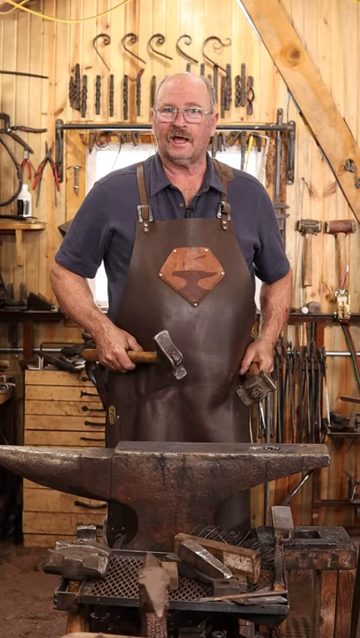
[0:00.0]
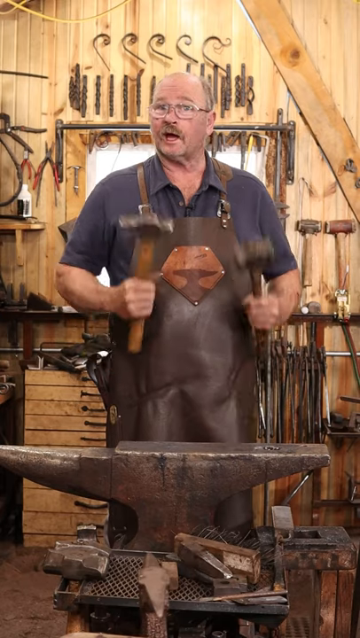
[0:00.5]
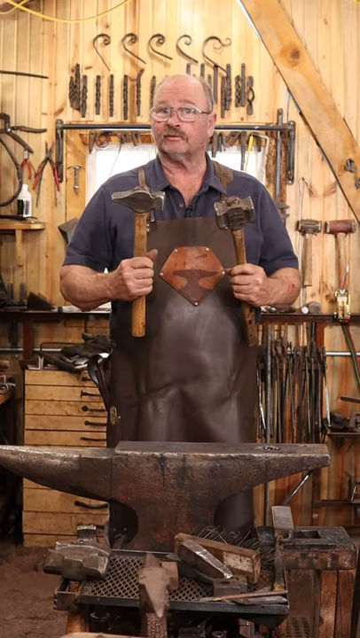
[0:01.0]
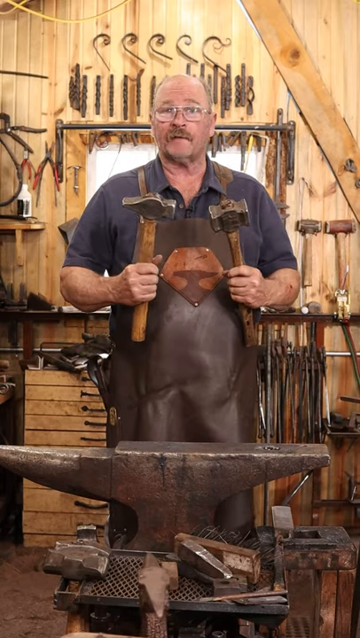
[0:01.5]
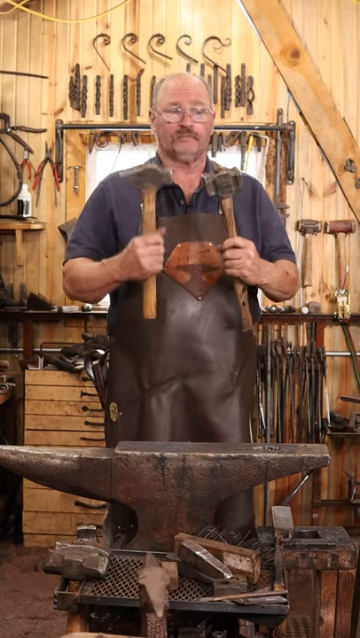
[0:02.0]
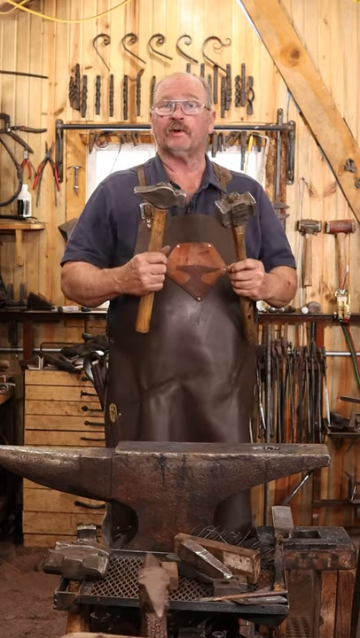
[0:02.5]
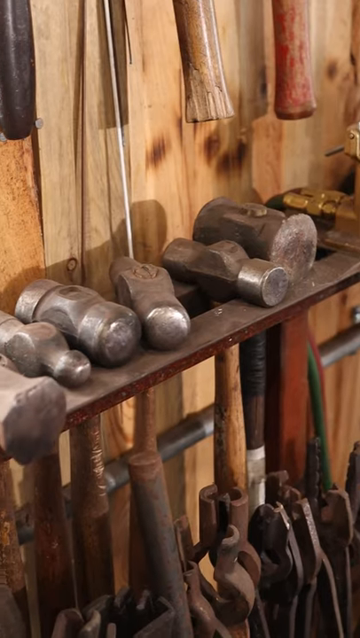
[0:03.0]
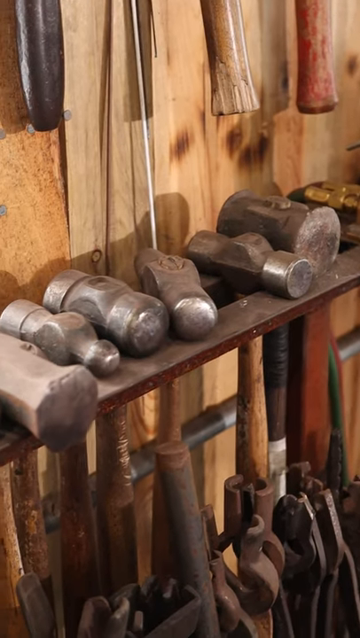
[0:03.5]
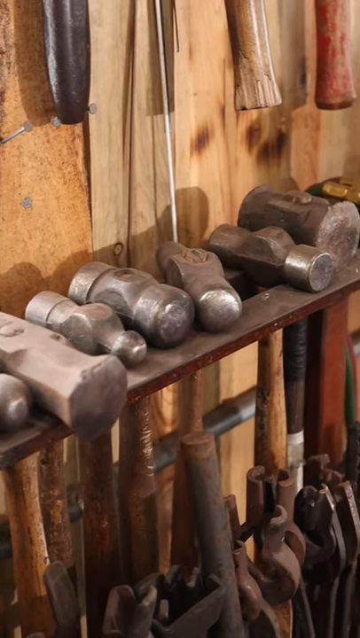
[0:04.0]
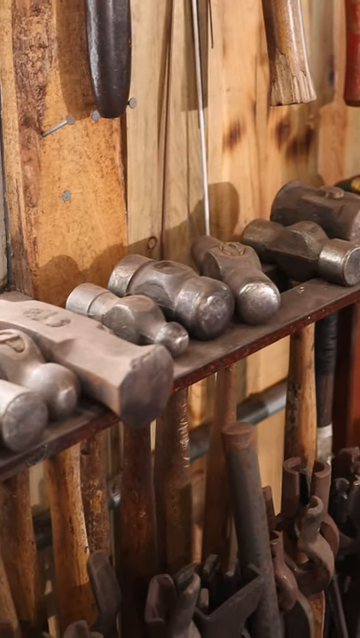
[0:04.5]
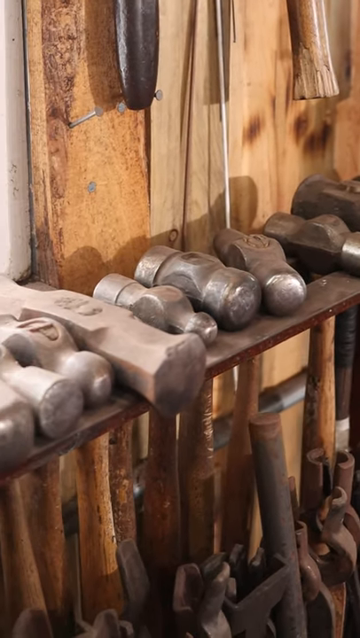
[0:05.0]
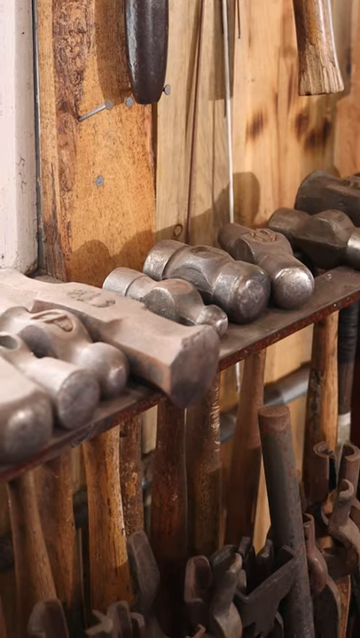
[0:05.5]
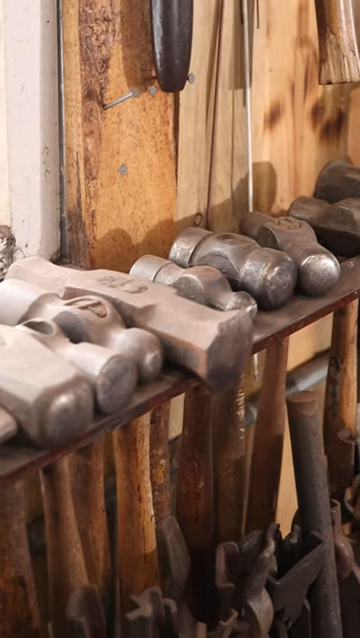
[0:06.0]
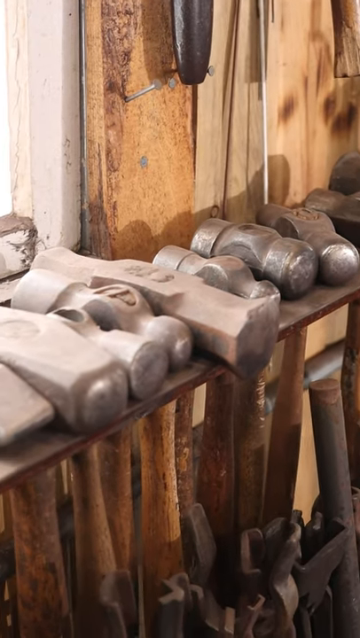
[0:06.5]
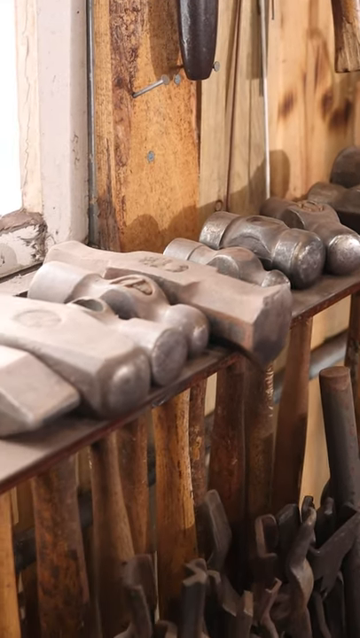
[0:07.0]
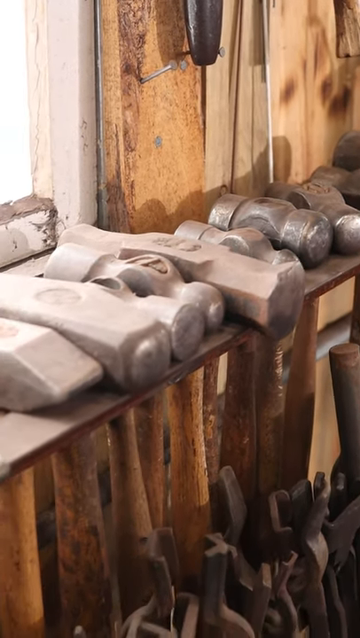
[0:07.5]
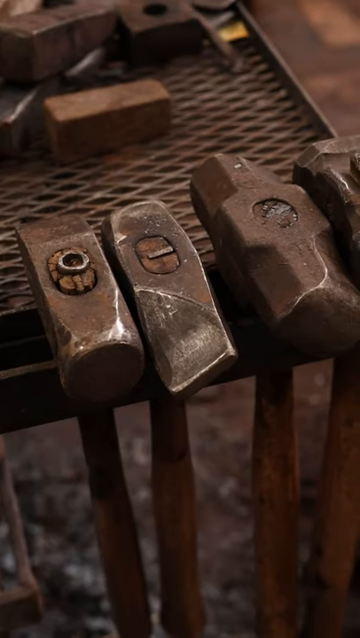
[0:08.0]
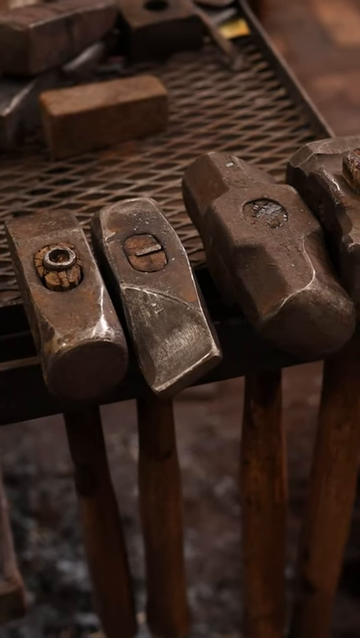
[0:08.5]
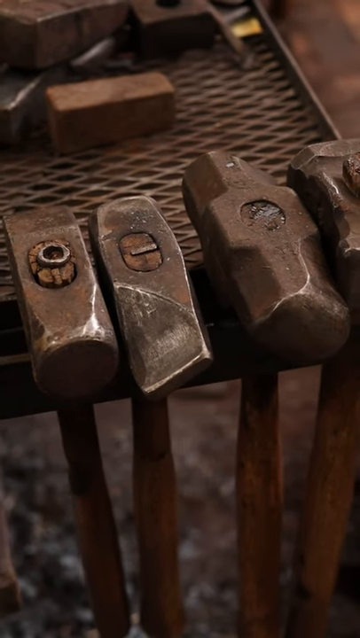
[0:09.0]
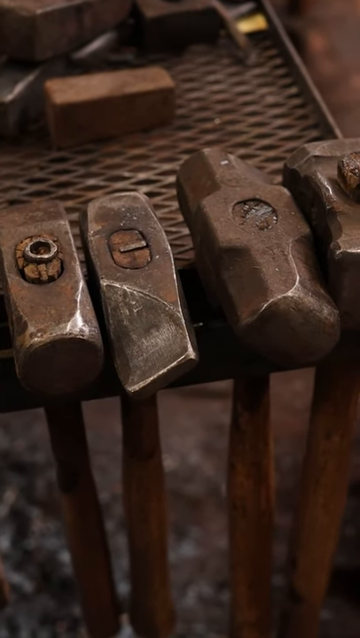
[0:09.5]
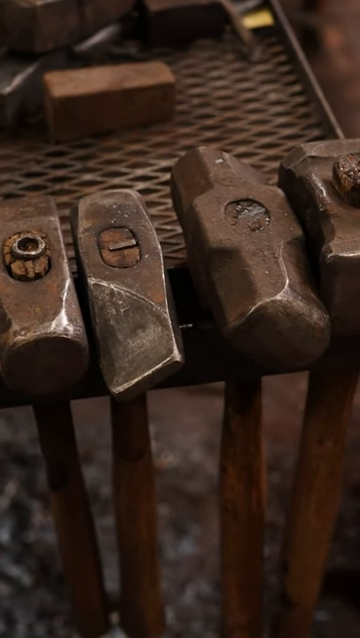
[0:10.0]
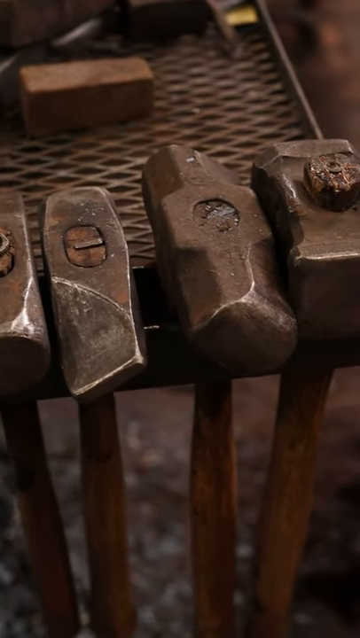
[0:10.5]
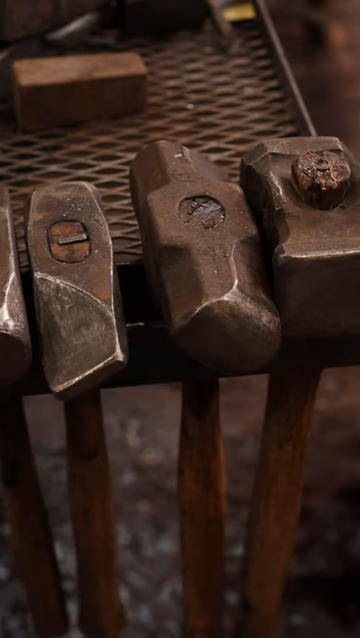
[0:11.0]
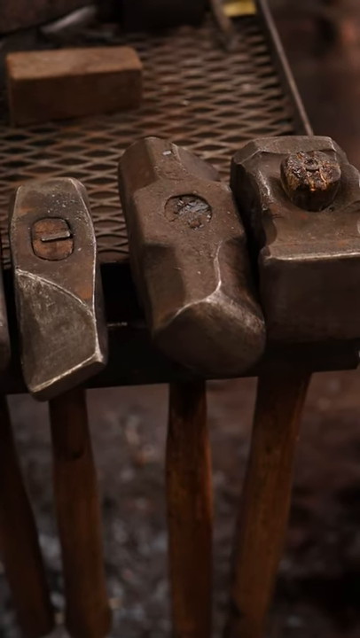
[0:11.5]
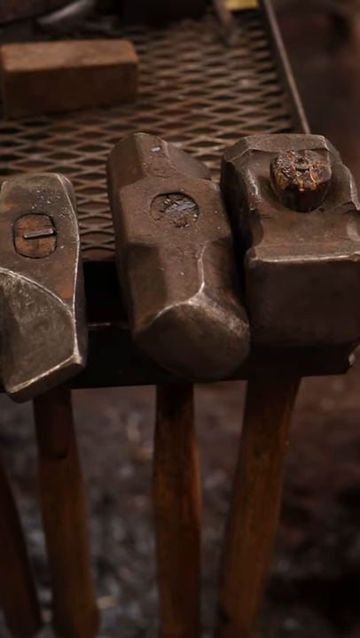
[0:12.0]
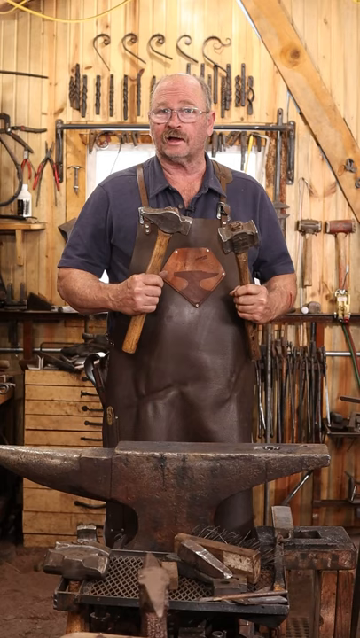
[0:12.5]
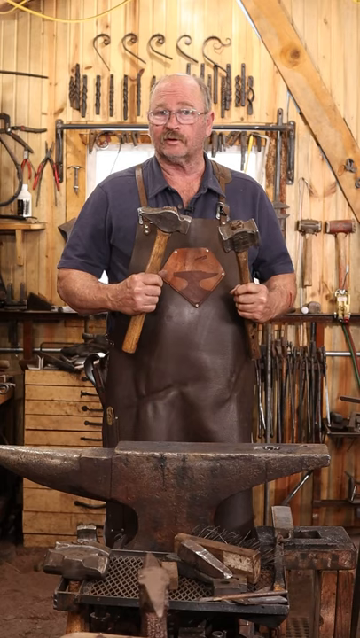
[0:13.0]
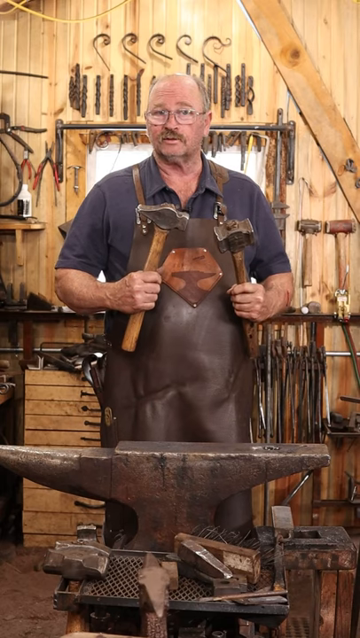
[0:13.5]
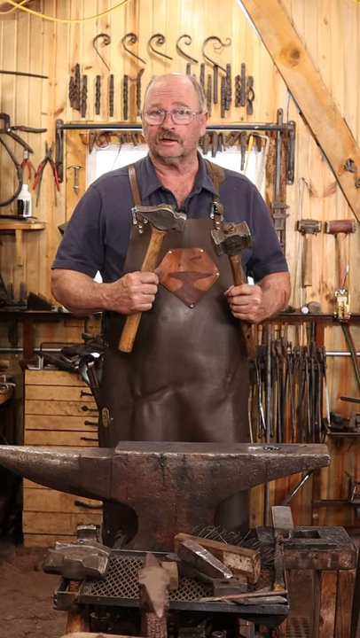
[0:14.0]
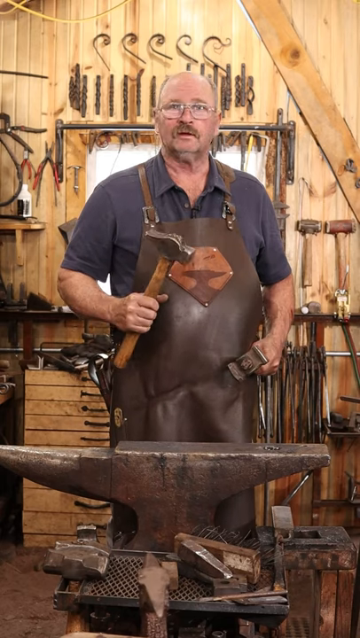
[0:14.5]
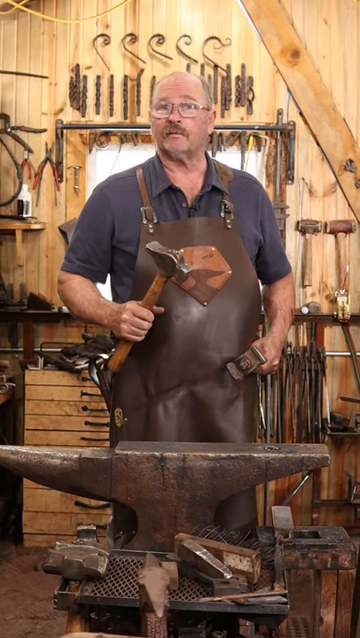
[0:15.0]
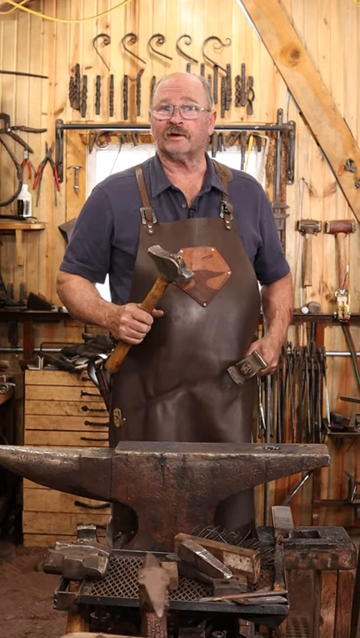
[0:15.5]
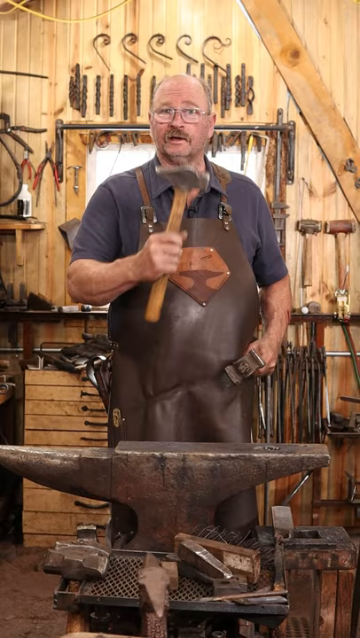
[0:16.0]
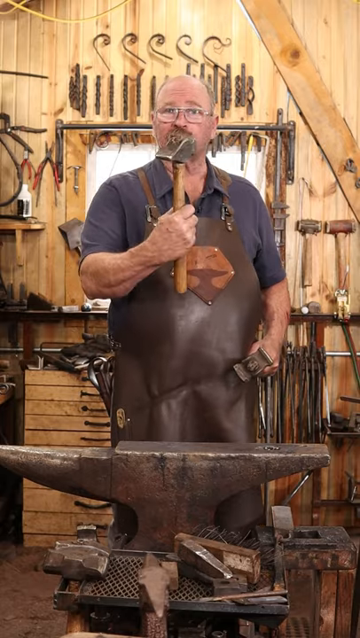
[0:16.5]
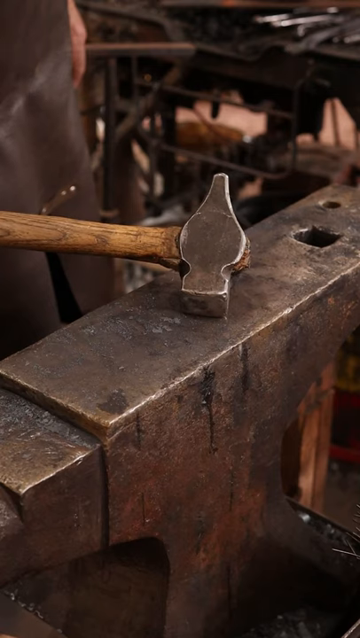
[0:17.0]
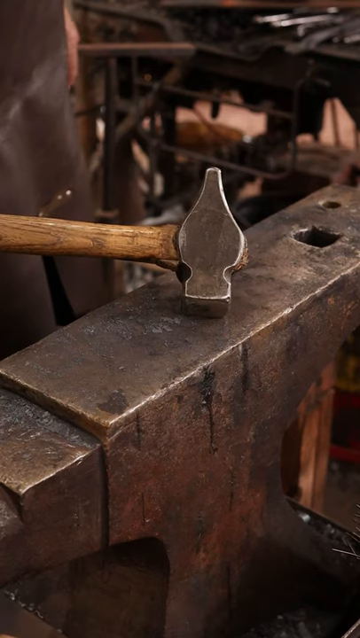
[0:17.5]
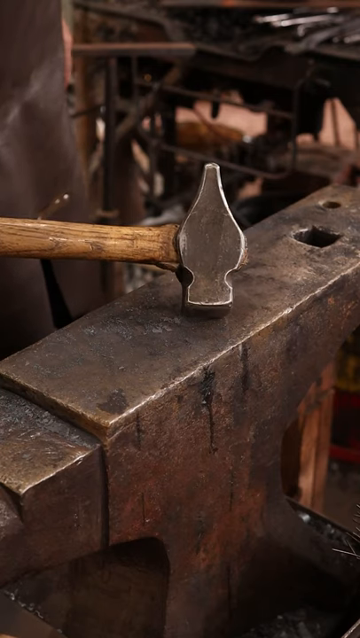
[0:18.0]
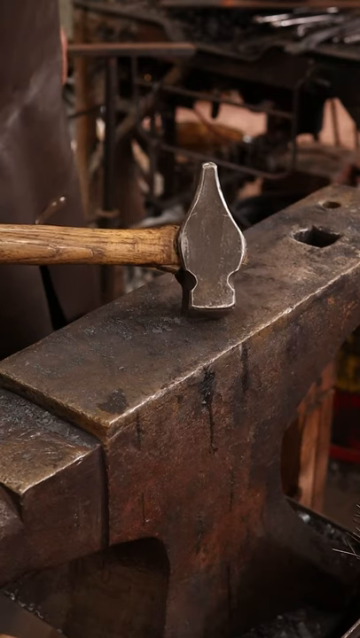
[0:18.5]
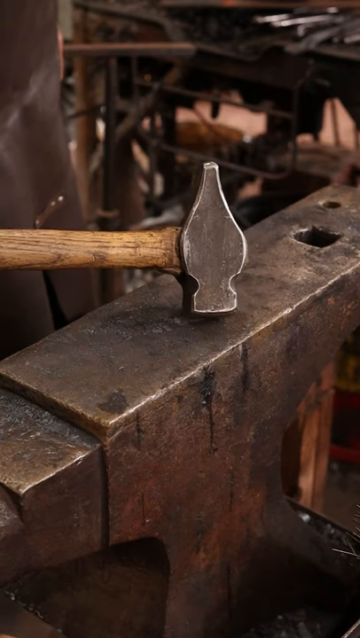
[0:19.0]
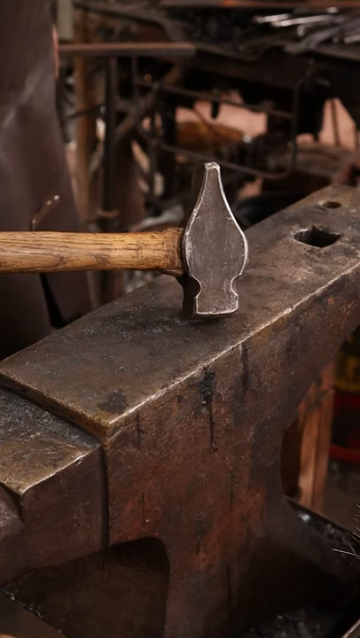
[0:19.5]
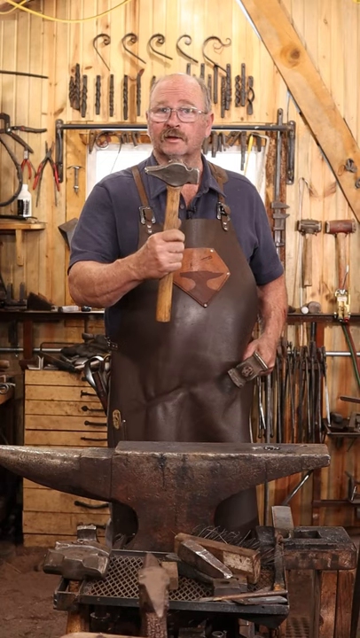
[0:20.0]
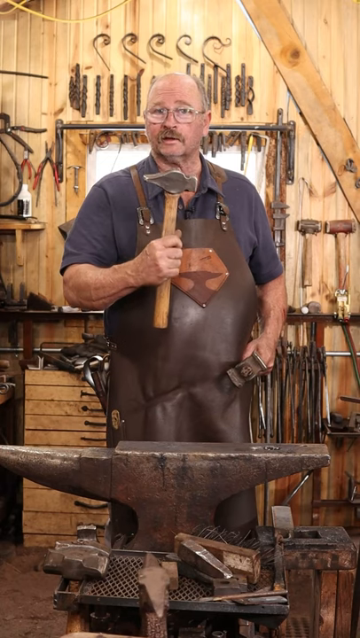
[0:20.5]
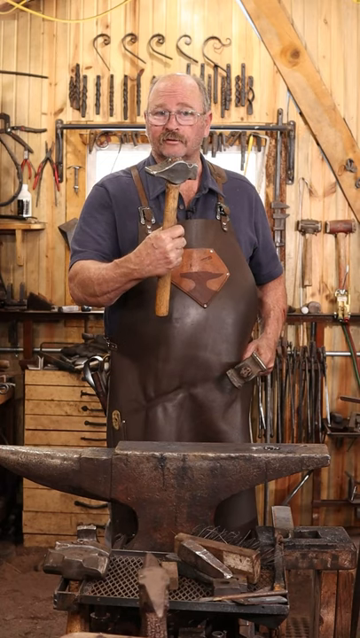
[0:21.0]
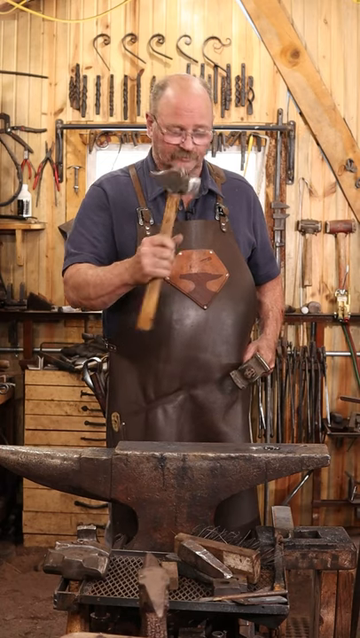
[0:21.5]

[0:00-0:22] A man who appears to be a blacksmith, or possibly a welder, holds two hammers. He shows a large number of hammers placed on a shelf, then some that are hanging on the side of a table, and then an anvil, with two hammers in his hands. The shot cuts back to him talking to the camera while holding the hammers; the video apparently aims to show the different types of hammers he probably makes. He wears what seems to be a leather-looking apron, appears to be bald, and has glasses and a brown mustache. They appear to be inside his work area, where many shelves are full of different types of hammers. The walls are made of wood and all have hammers hanging on them, and his toolbox looks like it is made of wood as well. The background shows only iron and wood.